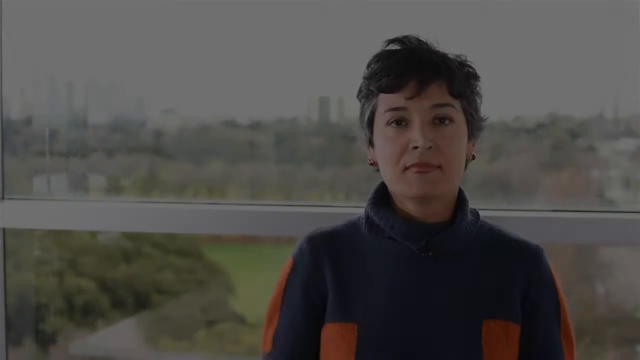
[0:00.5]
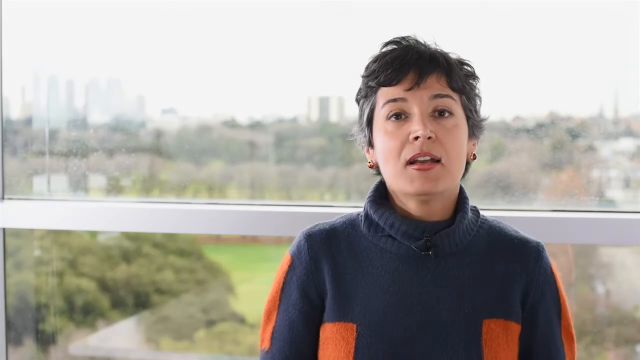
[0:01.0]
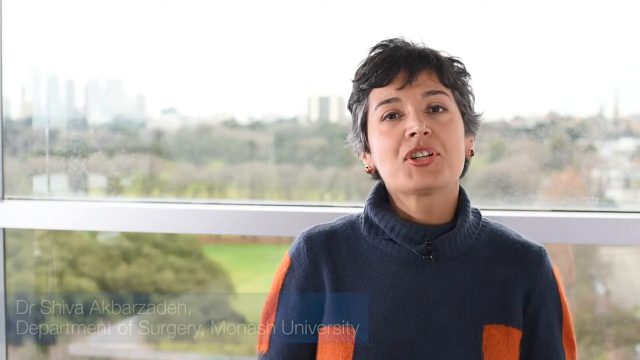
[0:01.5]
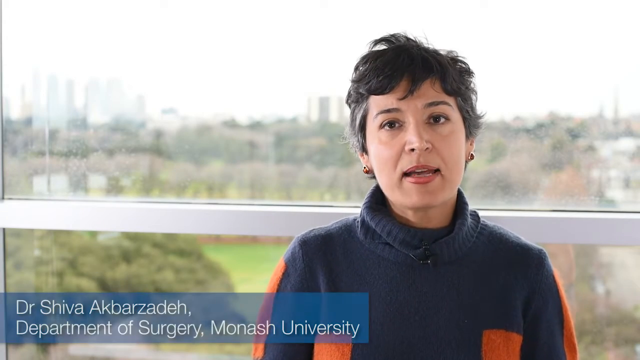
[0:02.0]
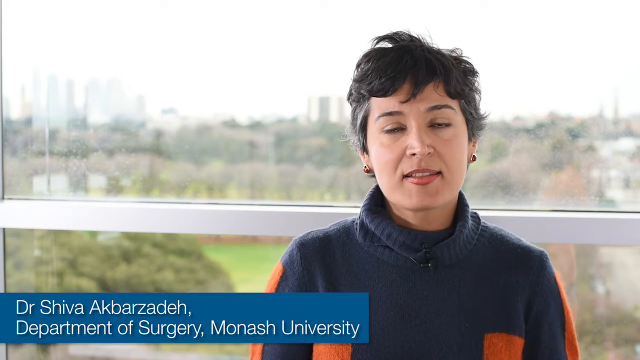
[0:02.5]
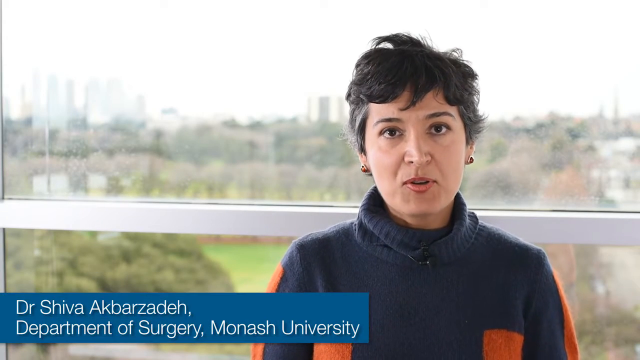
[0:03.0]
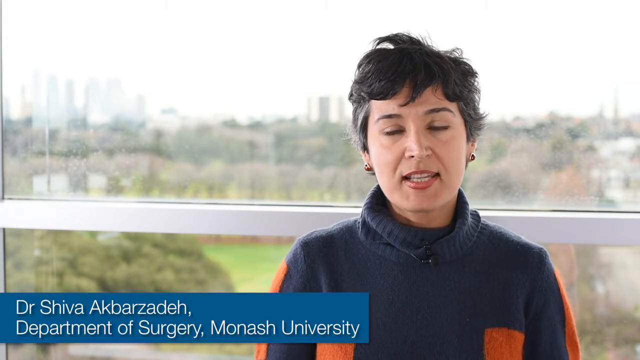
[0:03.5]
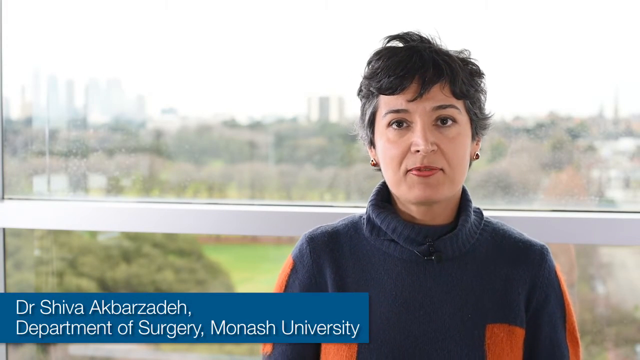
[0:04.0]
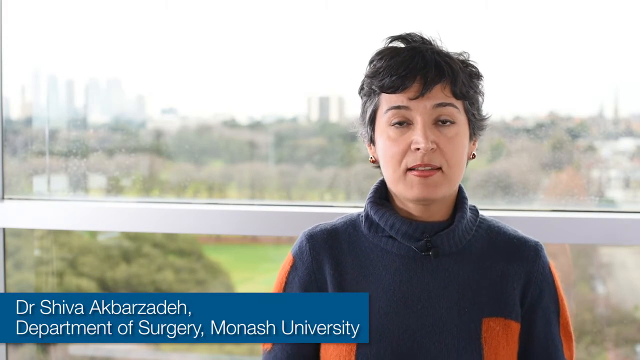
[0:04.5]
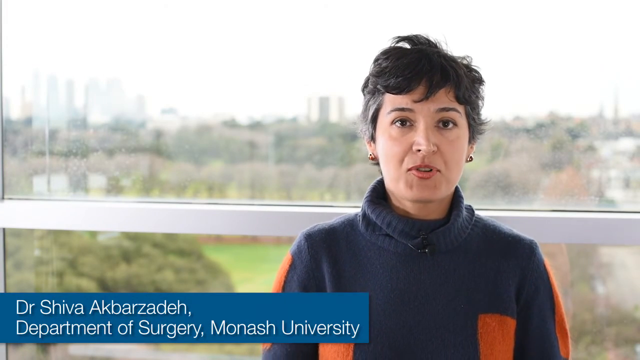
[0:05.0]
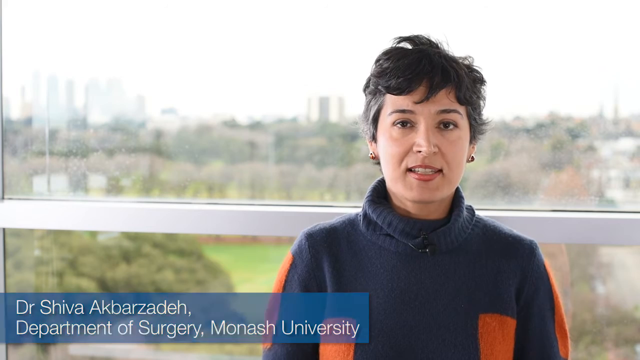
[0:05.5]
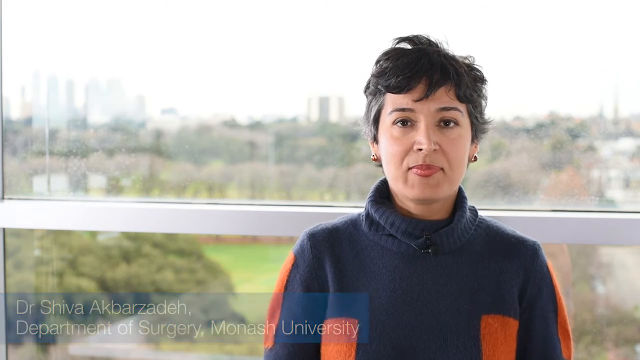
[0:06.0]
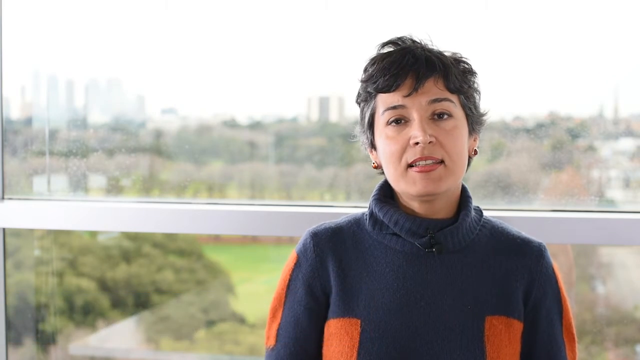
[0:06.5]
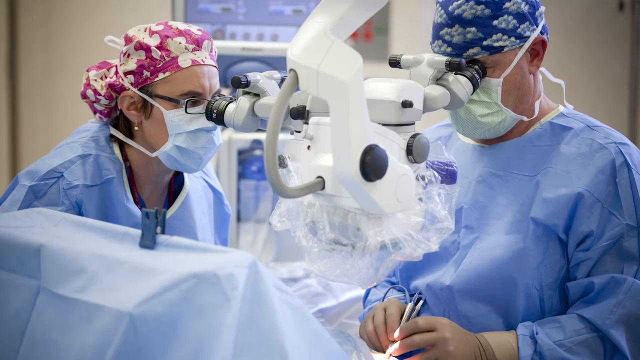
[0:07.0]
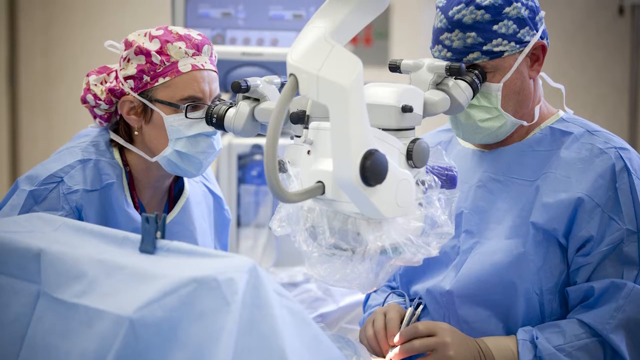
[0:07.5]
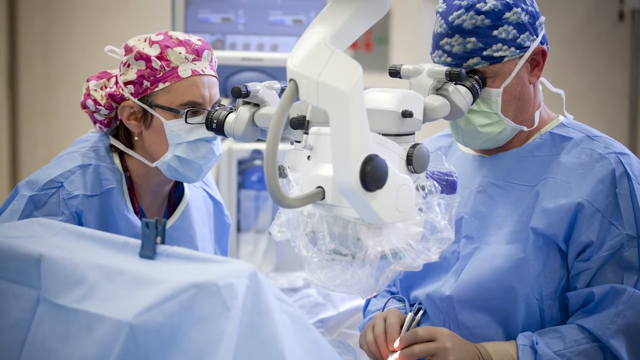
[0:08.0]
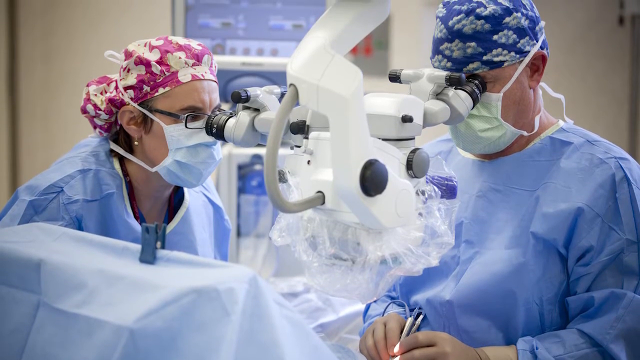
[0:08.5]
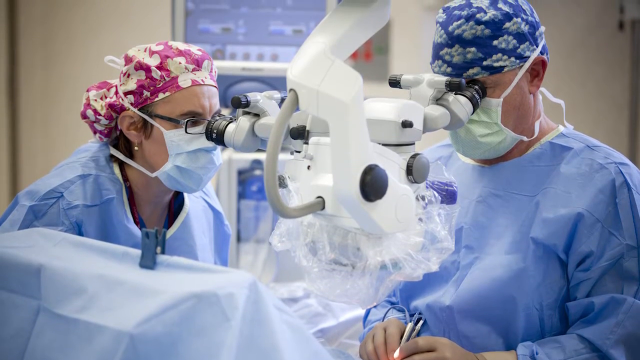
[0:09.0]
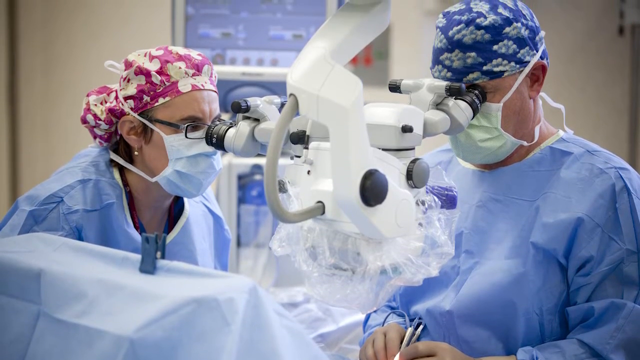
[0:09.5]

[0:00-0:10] A woman identified as Dr. Shivra Abbas-Cadez is talking, positioned on the right side of the frame, and she is shown to be from the Department of Surgery, Manashe University. The video then moves to a surgery unit, where this doctor is on the left. She wears a pink cap with white flowers, rectangular glasses and a white mask, and she is looking through an almost binocular-type piece of equipment that is maybe helping her zoom in on the surgery she is doing. Beside her on the right is another doctor wearing a navy cap with fluffy grayish clouds on it and a yellow mask. Both wear blue gowns. The equipment in the middle is a kind of whitish beige color with two black circles on the back.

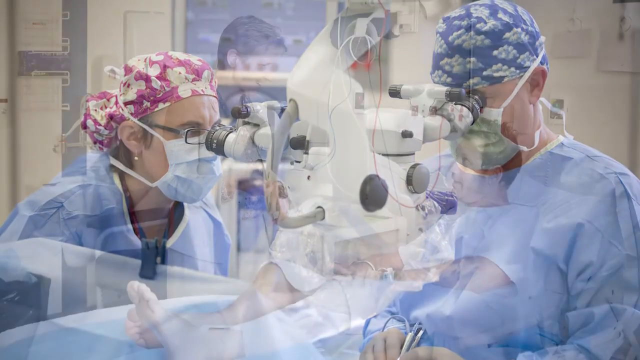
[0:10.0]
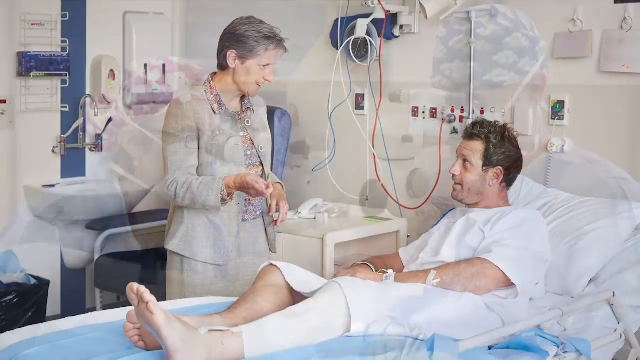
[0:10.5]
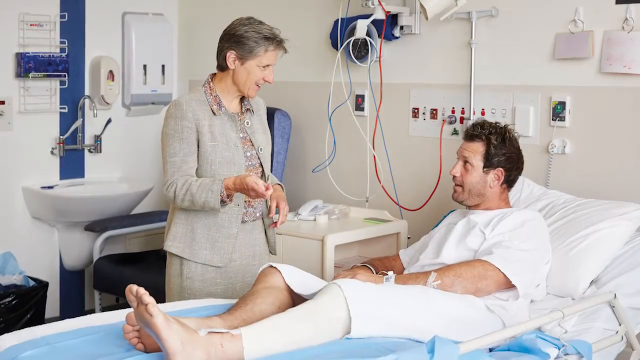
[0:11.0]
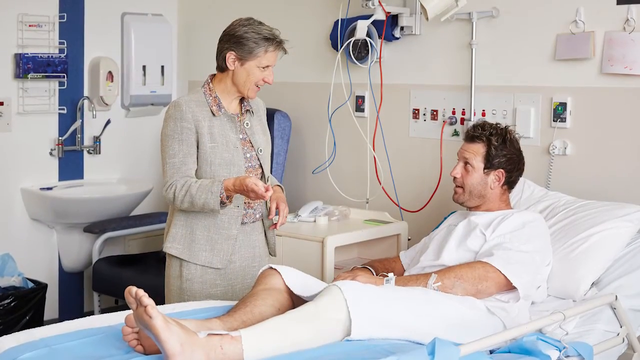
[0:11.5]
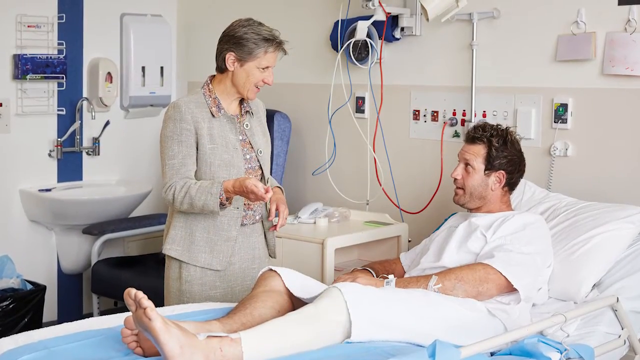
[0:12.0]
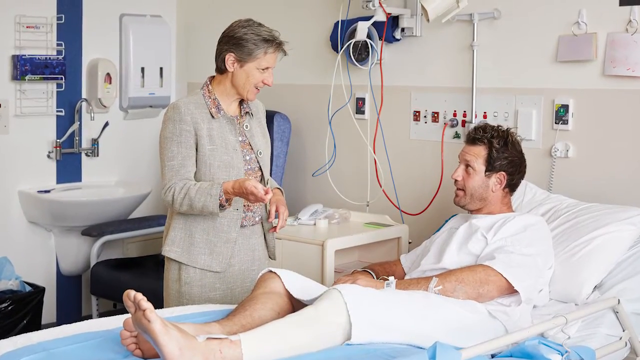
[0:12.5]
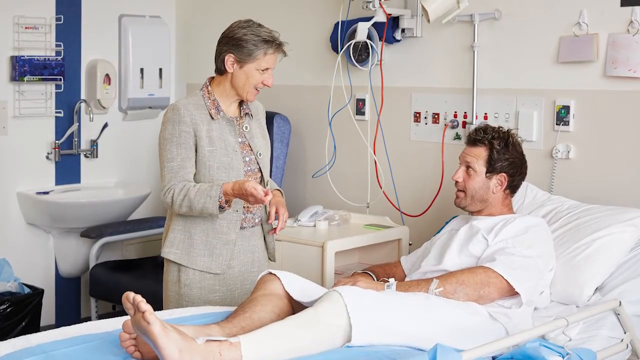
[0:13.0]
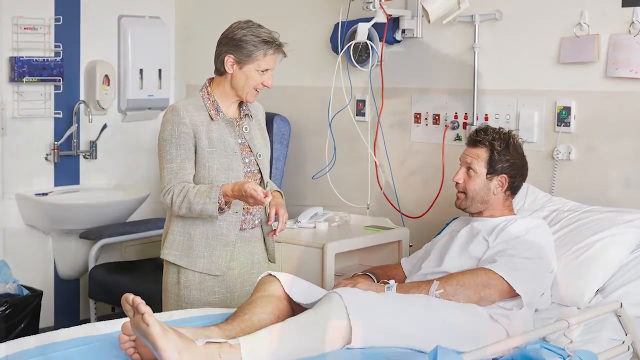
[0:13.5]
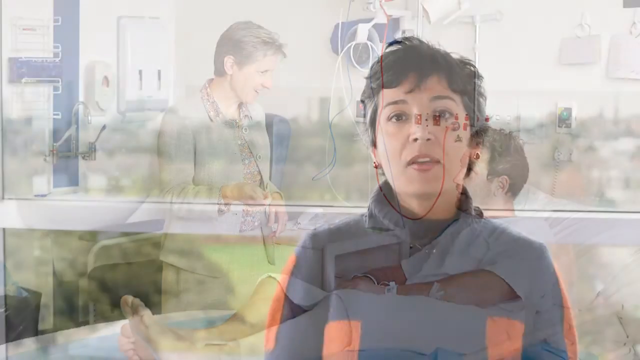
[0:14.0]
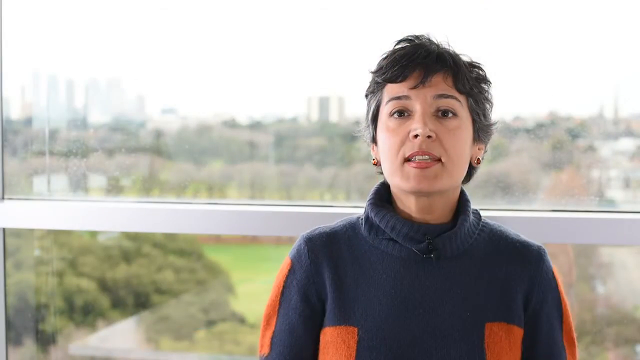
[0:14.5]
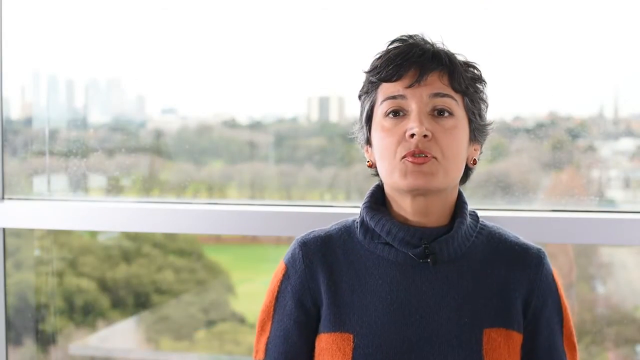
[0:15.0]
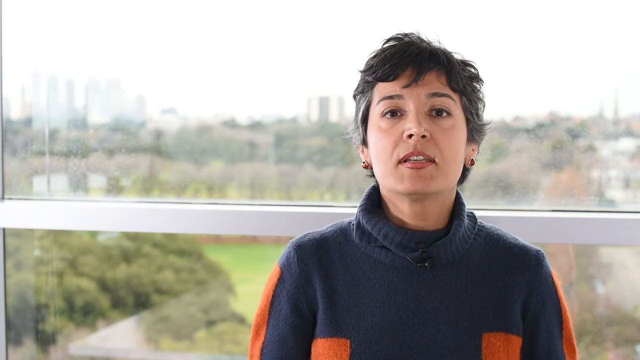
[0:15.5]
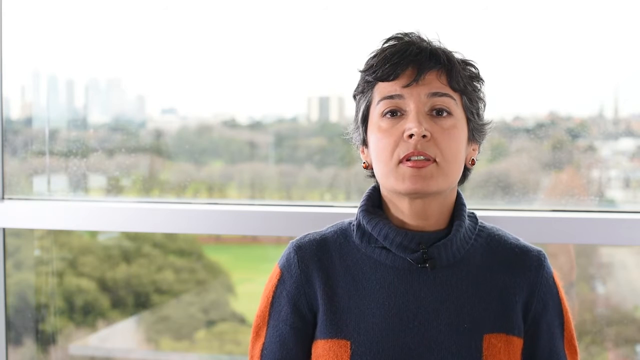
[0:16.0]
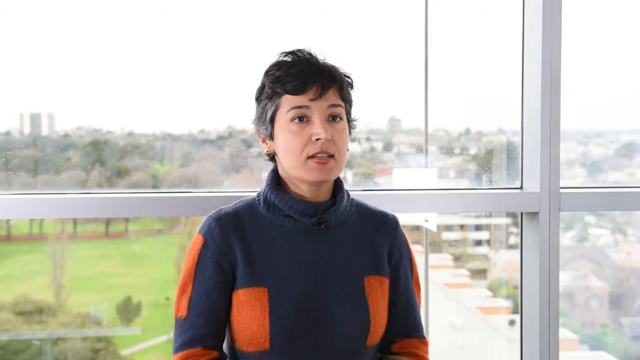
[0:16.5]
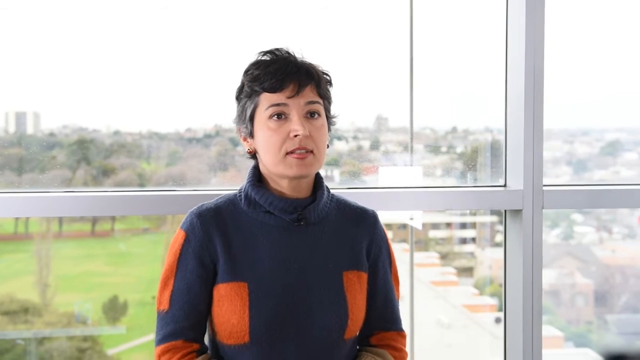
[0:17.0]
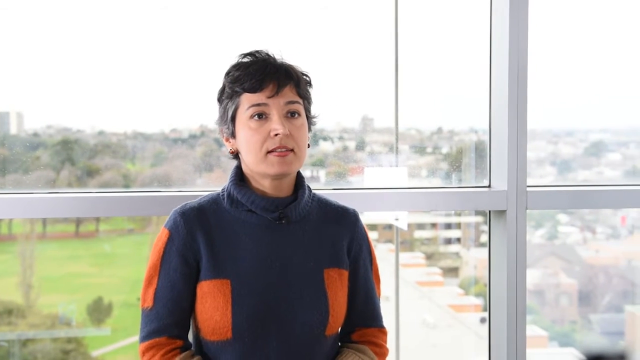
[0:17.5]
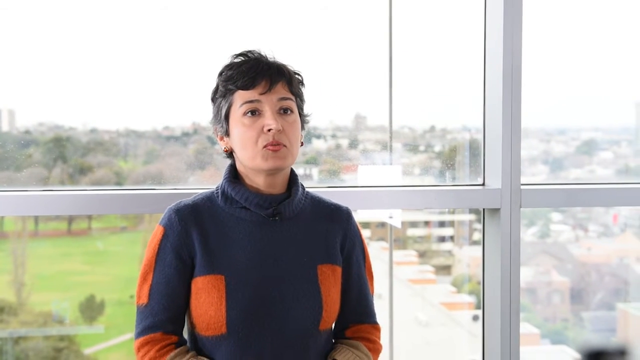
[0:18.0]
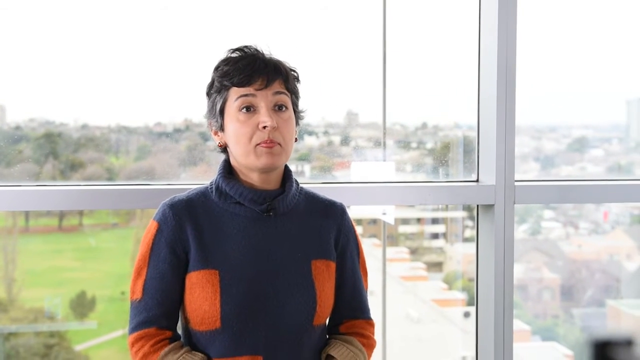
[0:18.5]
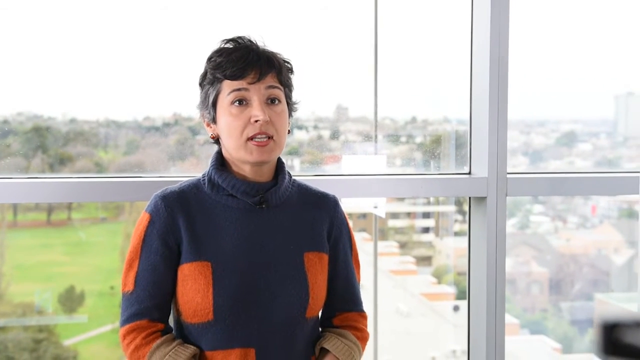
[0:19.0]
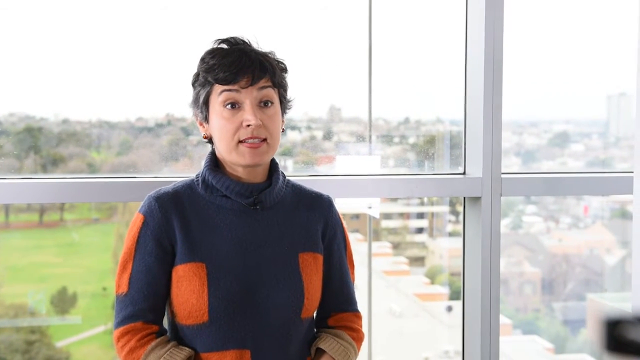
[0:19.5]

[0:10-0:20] Two doctors, gowned up in surgery gear, are in an operating room. The video cuts to a woman talking to a patient lying in a hospital bed. He wears a white gown, seems to have some IVs attached to his left arm, and has a hospital bracelet on his right arm. On the left side of the frame there are paper towels hanging, with a sink to the left of the paper towels.